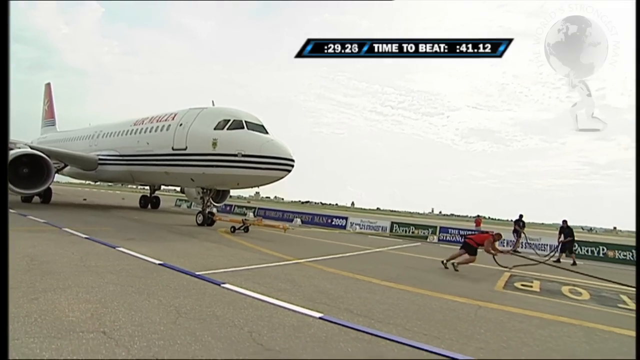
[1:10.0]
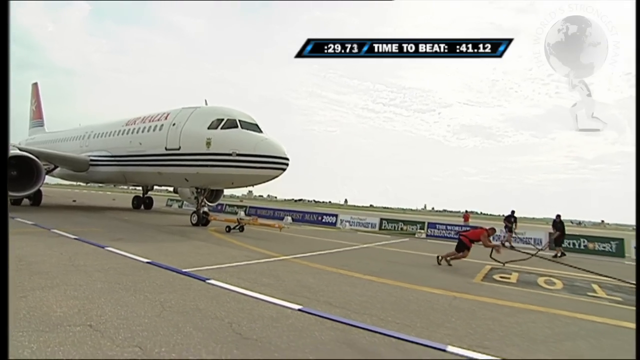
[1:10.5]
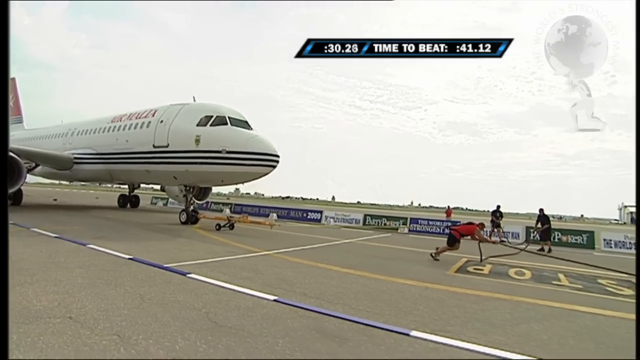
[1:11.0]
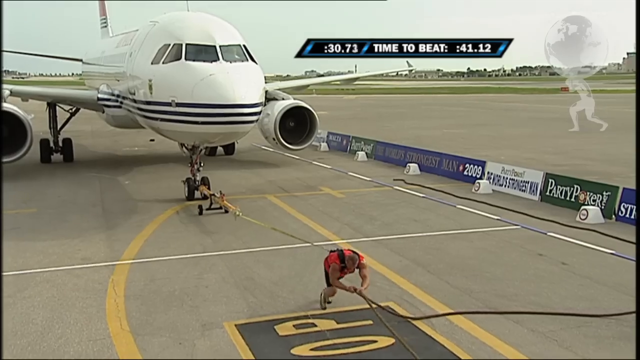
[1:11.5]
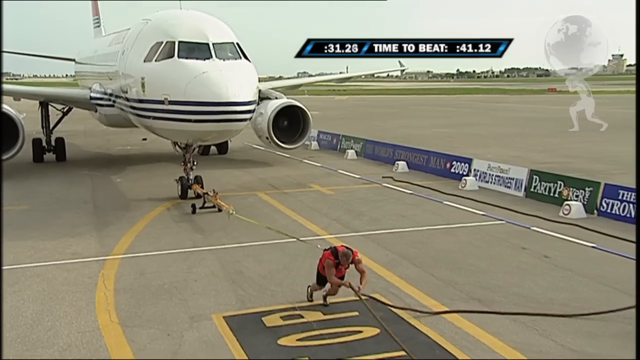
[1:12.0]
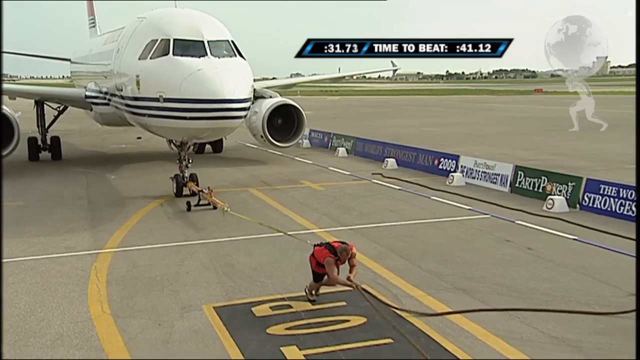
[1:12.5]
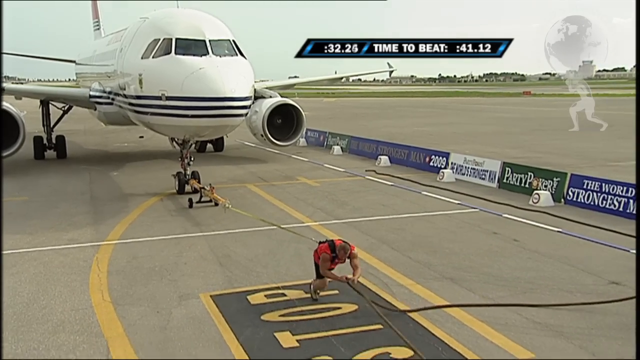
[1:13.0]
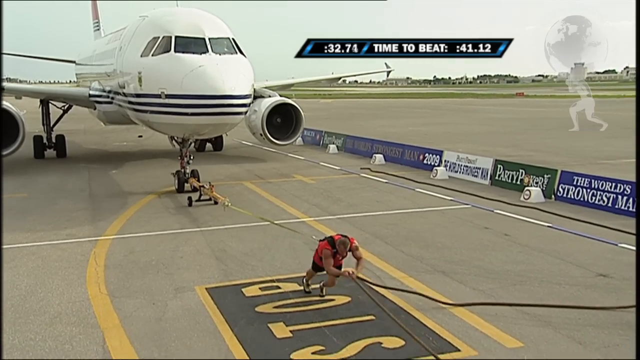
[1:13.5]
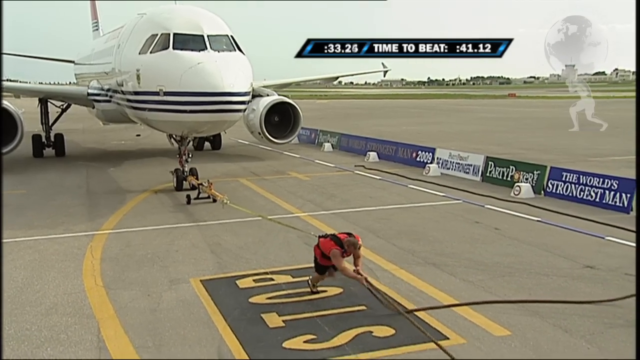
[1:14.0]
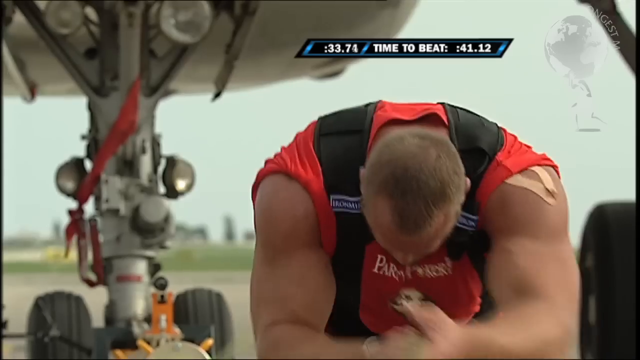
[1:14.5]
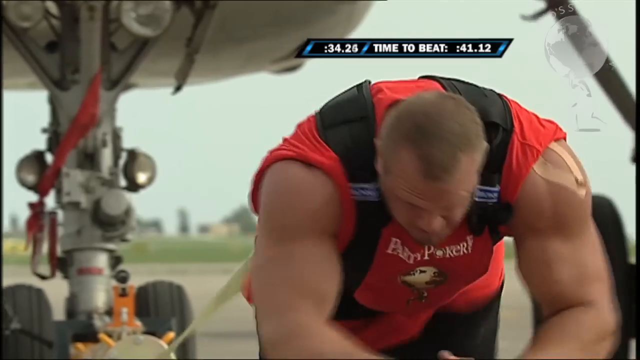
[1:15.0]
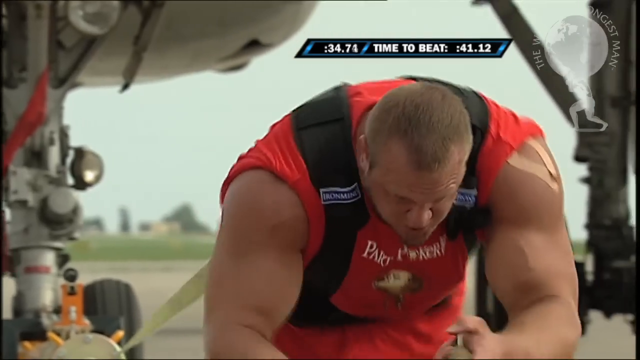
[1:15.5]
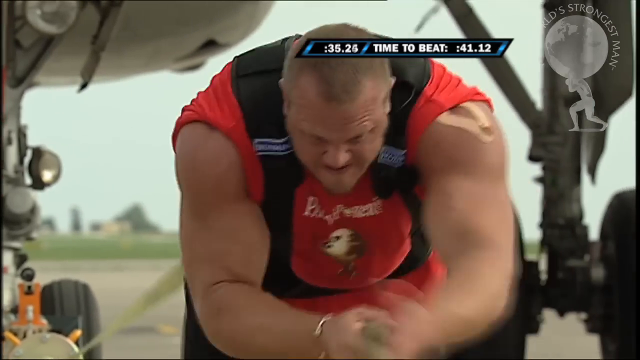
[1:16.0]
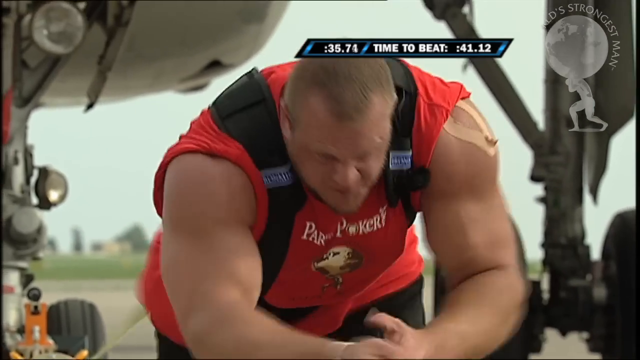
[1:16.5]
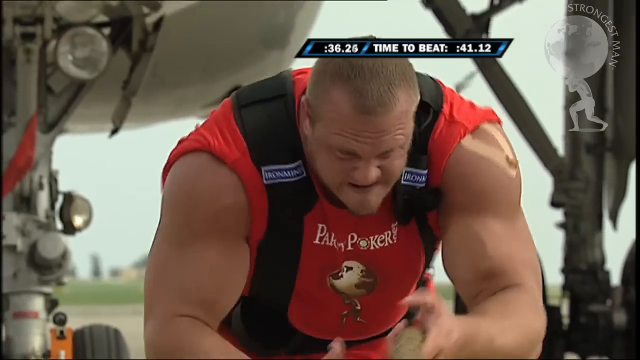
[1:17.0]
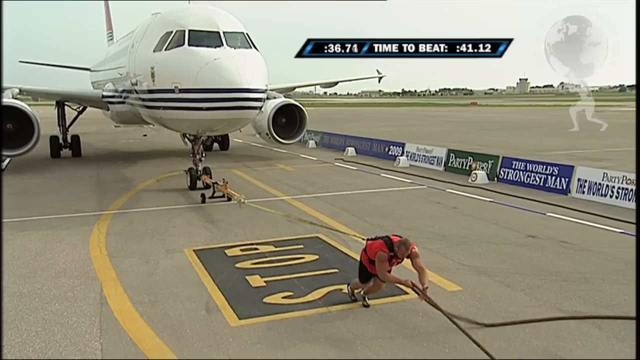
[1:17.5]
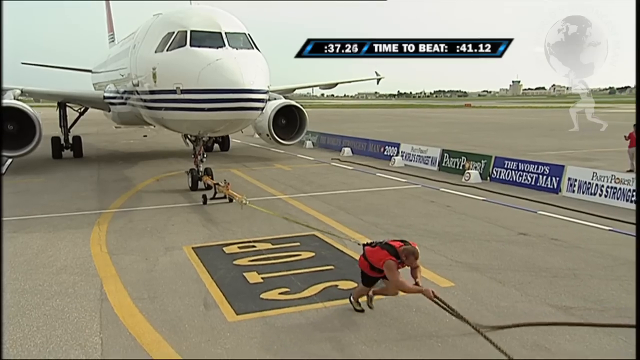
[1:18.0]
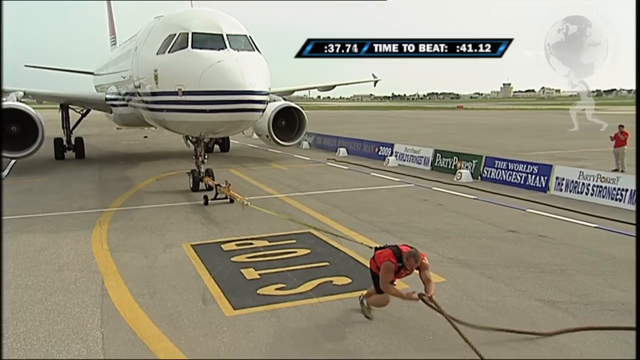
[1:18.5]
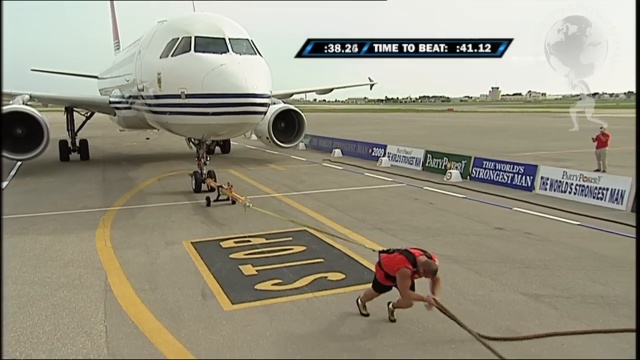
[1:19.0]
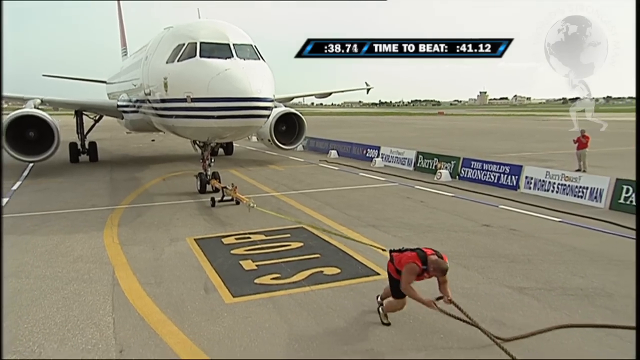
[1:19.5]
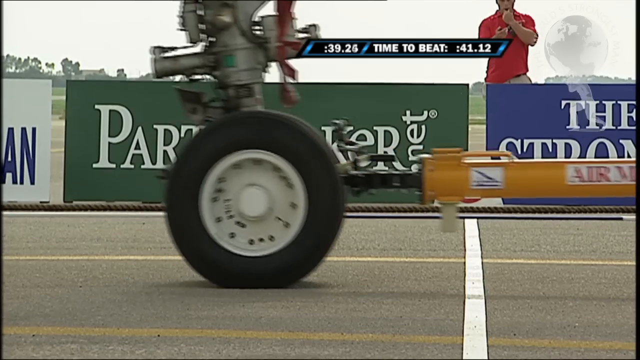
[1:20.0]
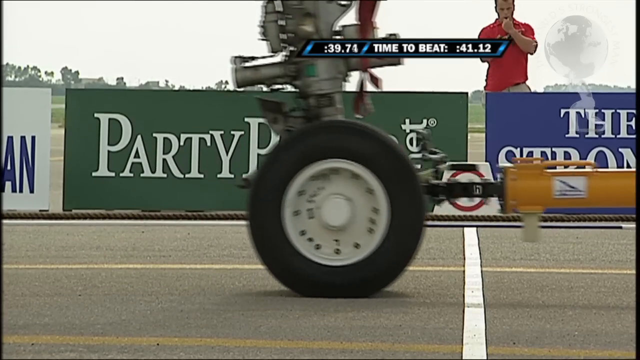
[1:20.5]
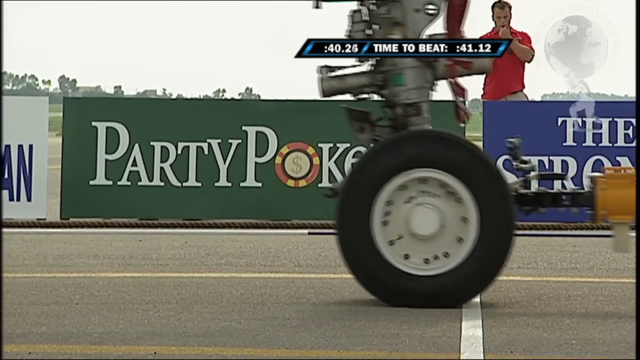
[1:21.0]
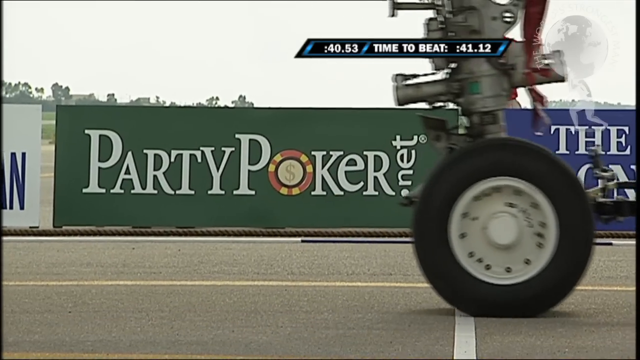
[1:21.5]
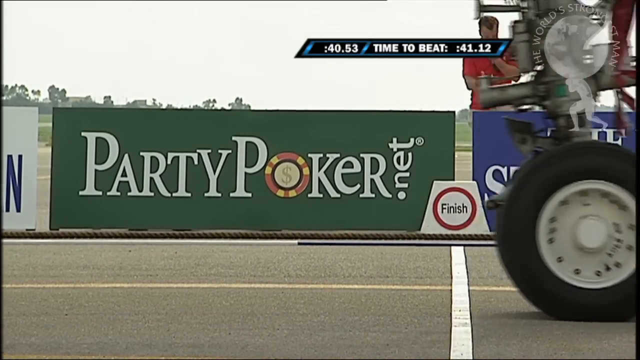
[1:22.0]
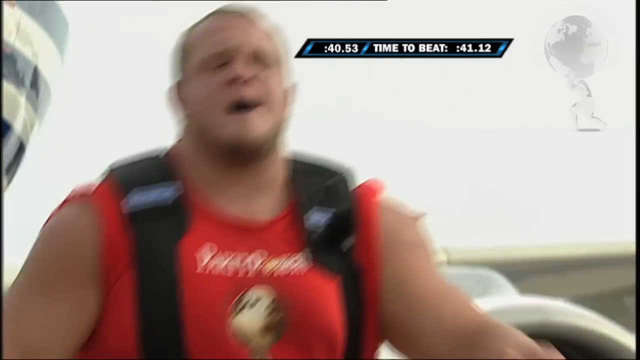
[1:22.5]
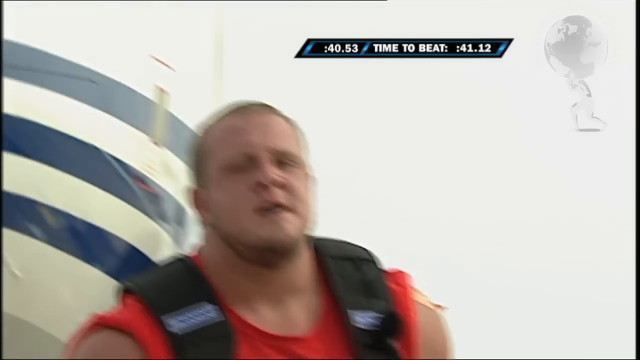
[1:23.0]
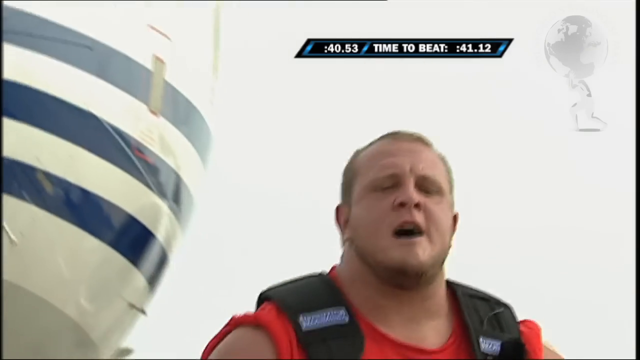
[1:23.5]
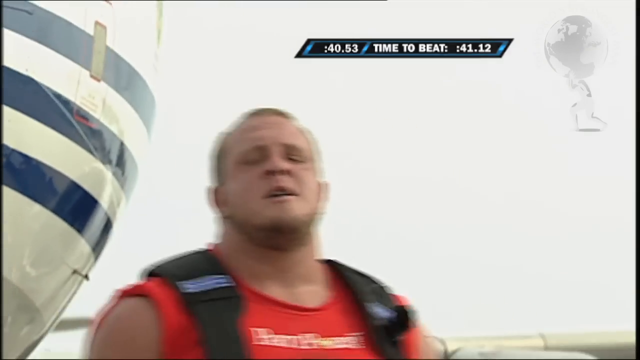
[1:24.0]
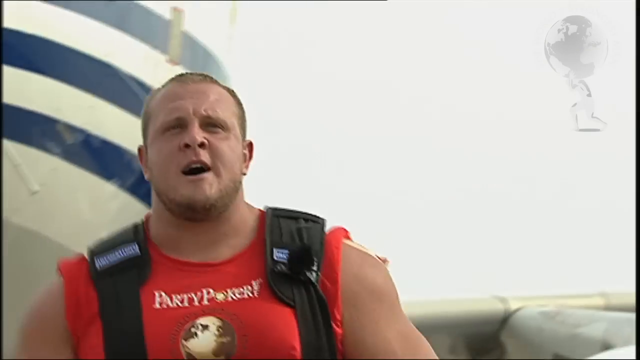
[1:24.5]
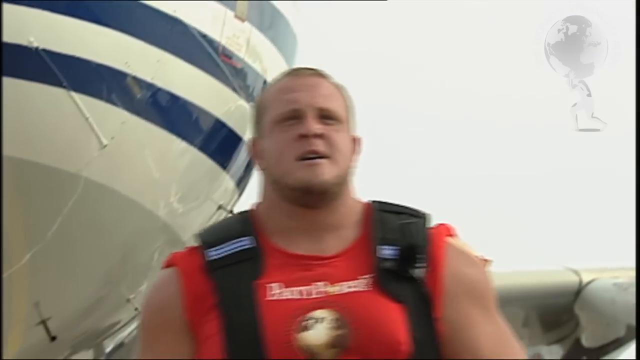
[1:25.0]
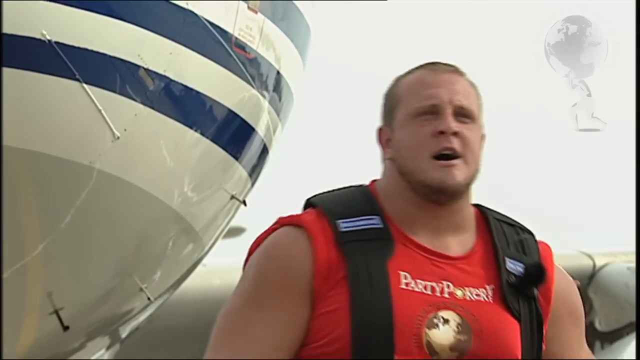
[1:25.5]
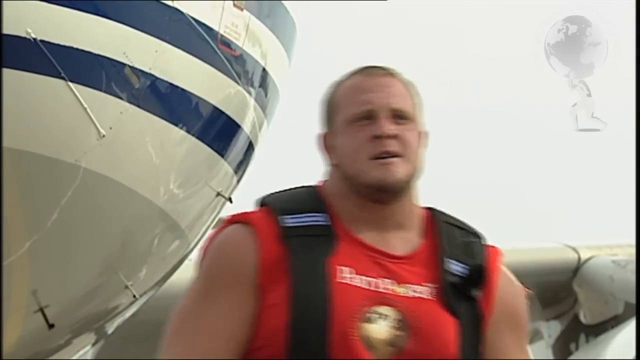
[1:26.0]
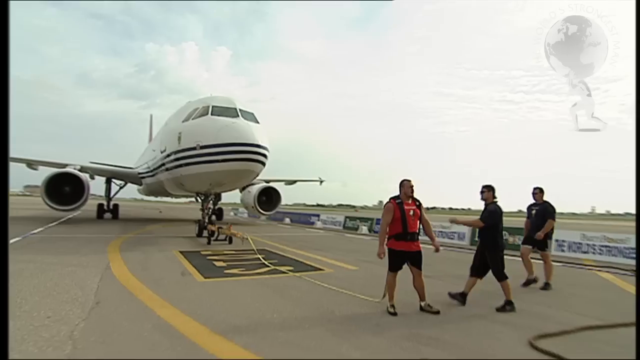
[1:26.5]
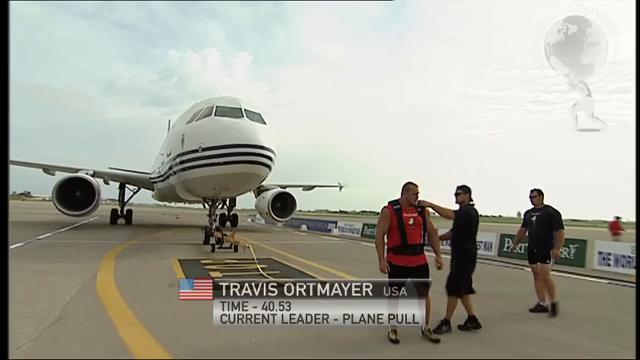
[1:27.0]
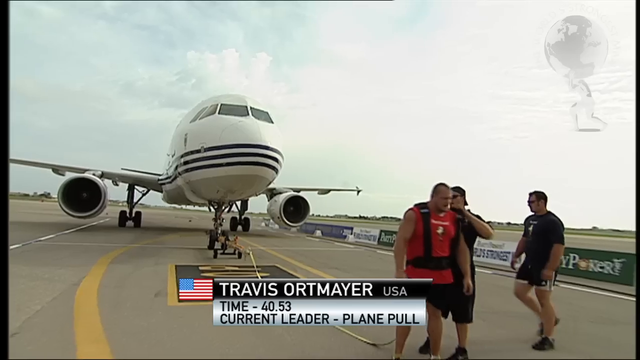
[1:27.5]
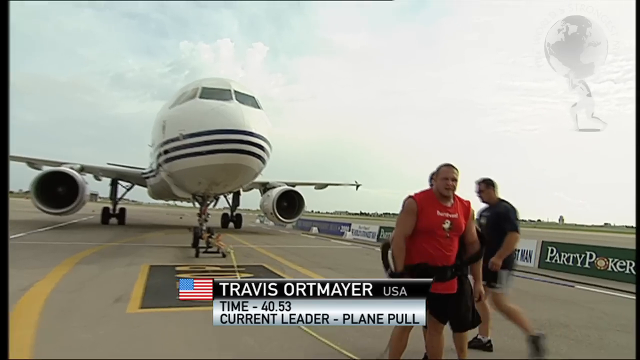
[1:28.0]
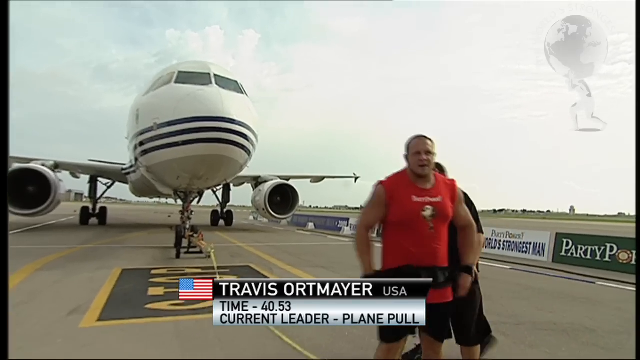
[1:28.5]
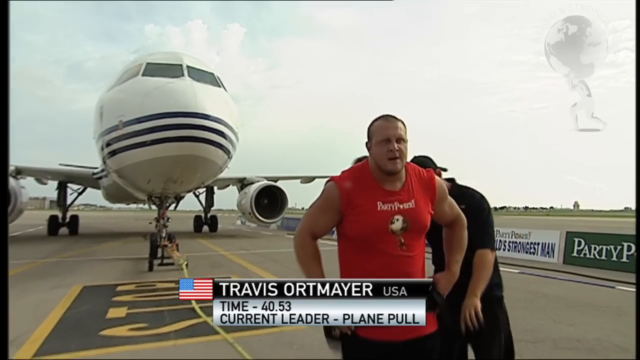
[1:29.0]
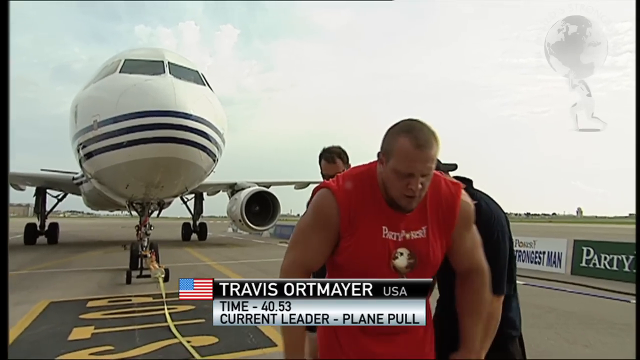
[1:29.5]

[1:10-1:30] Travis Ortmeier, a large, muscular man in a red shirt and black shorts, competes in the Plane Pull of the World's Strongest Man competition. He wears a large harness attached to the 44-ton airplane behind him and holds a rope in front of him to steady himself as he walks forward. His time to beat is 41.12 seconds. The World's Strongest Man logo, a strongman holding the world above himself, is watermarked in the top right corner. A wide shot shows Ortmeier dragging the plane, which rolls forward with each step as he keeps pulling on the rope with his hands in front of him. He reaches the end, and his time as the plane crosses the finish line is 40.53, slightly faster than the 41.12 time to beat, making him the current leader of the Plane Pull.